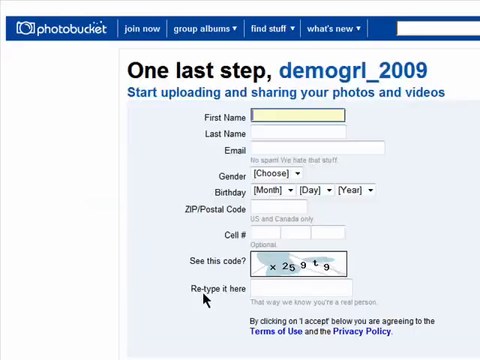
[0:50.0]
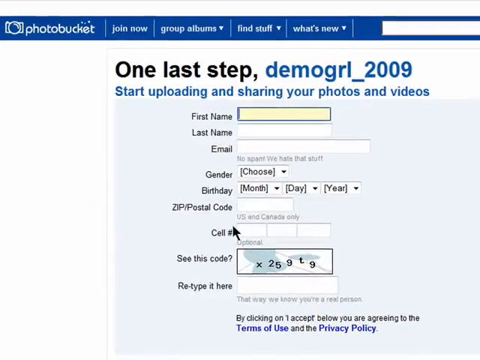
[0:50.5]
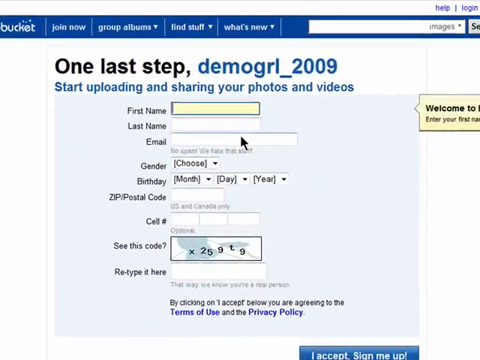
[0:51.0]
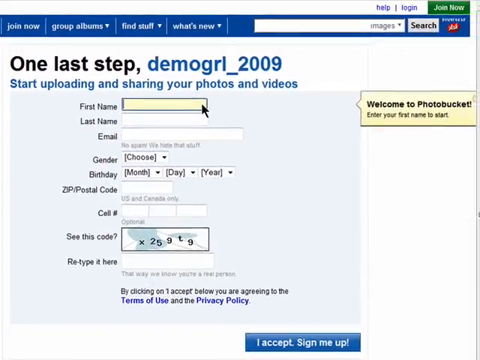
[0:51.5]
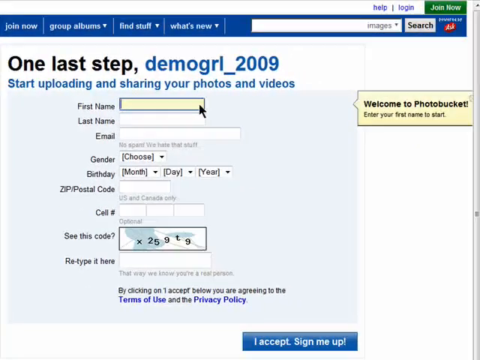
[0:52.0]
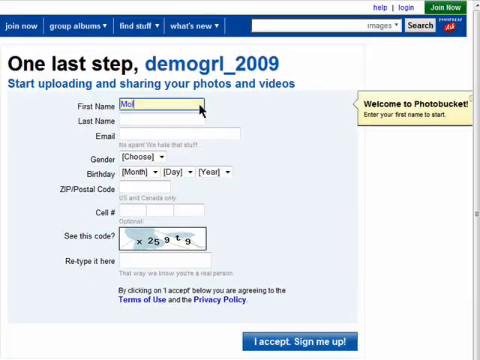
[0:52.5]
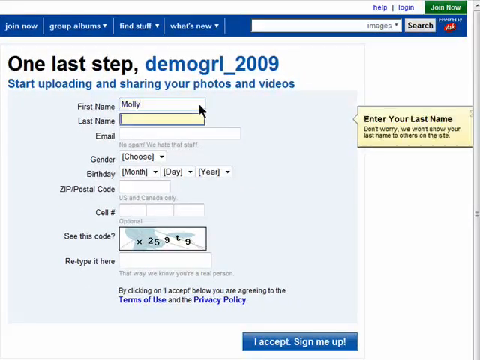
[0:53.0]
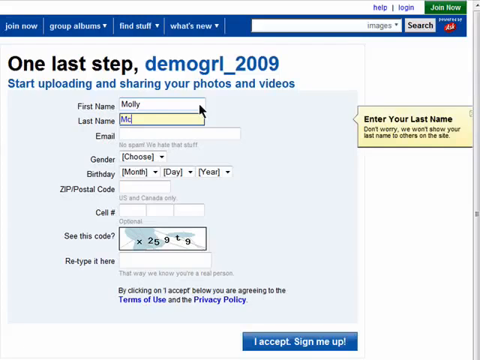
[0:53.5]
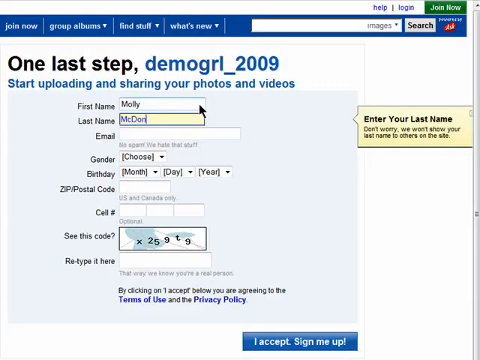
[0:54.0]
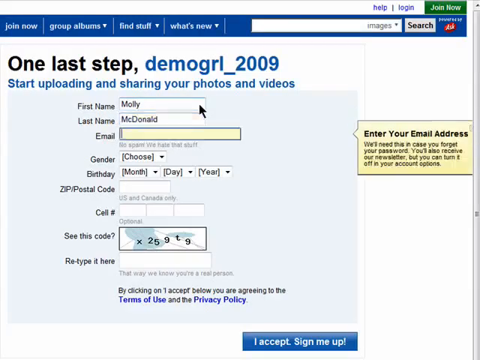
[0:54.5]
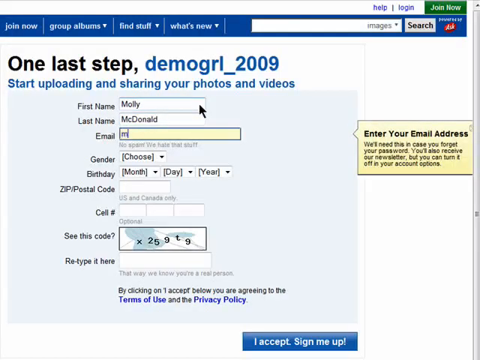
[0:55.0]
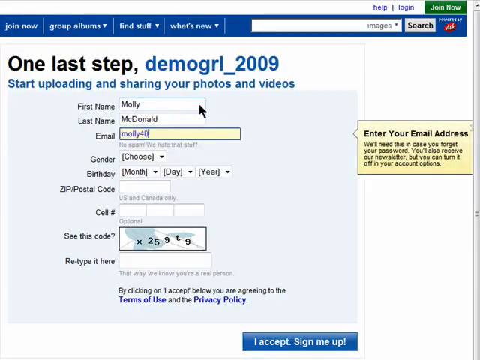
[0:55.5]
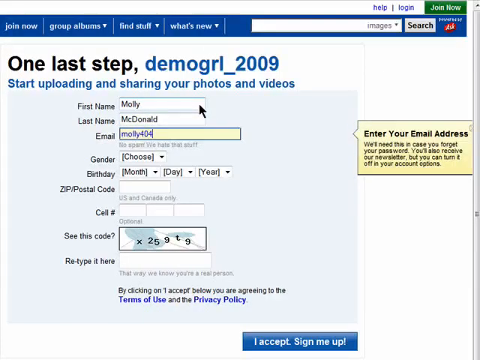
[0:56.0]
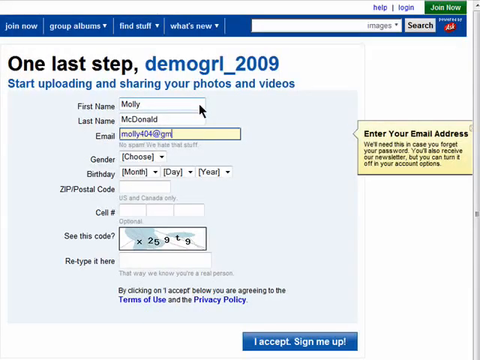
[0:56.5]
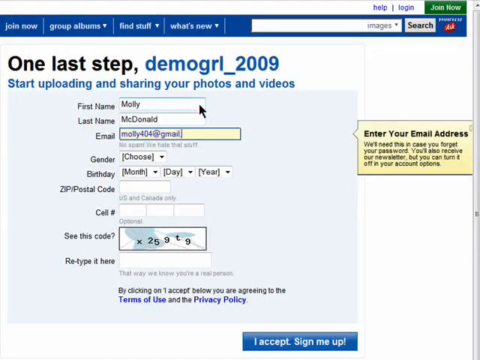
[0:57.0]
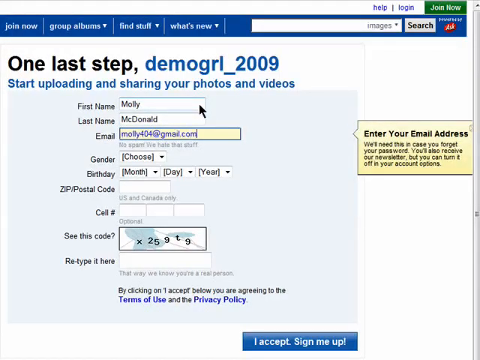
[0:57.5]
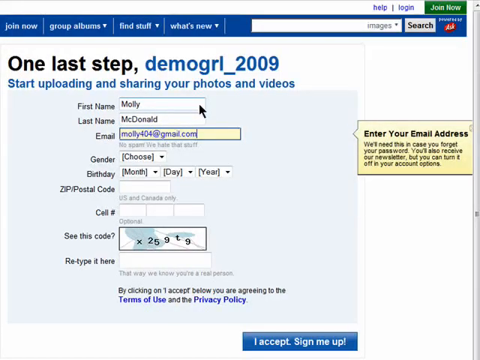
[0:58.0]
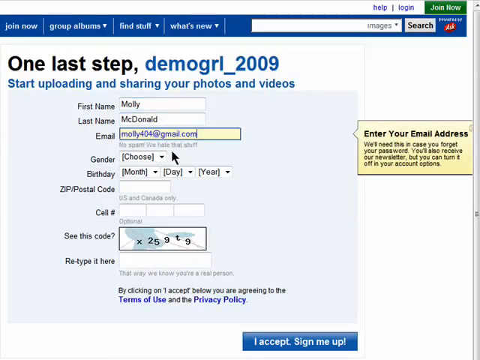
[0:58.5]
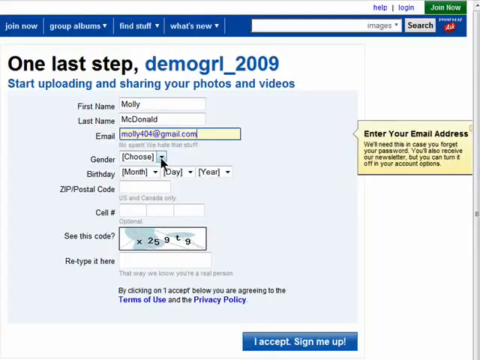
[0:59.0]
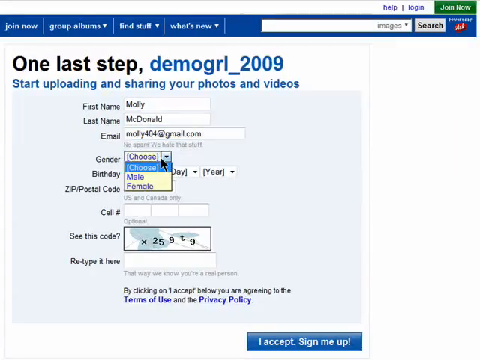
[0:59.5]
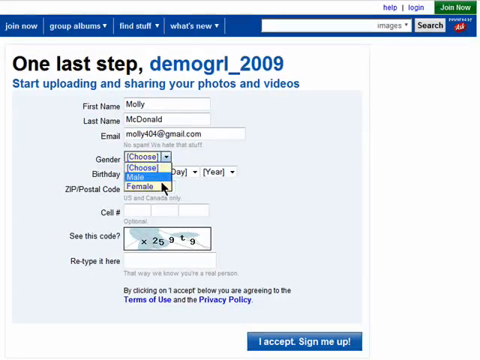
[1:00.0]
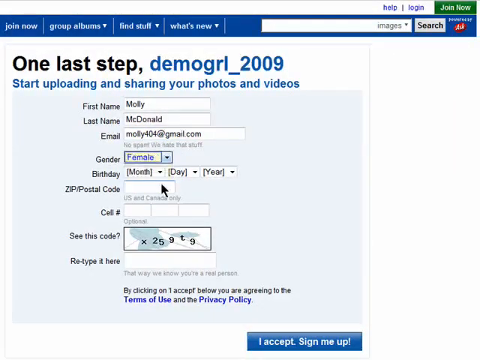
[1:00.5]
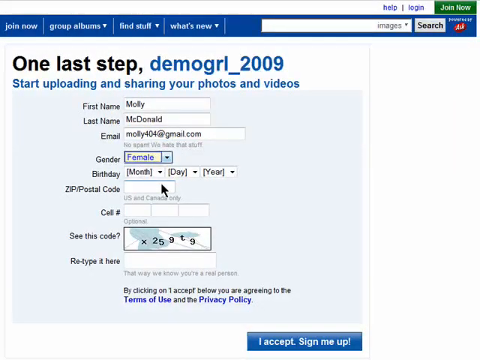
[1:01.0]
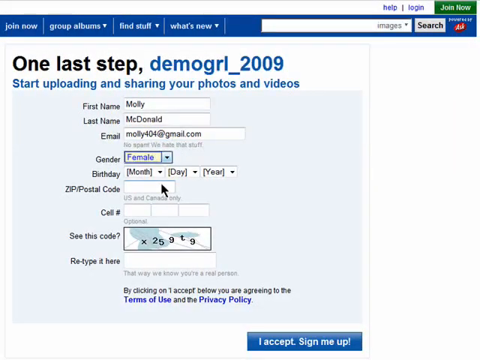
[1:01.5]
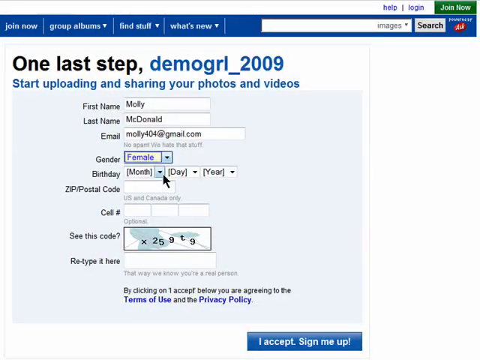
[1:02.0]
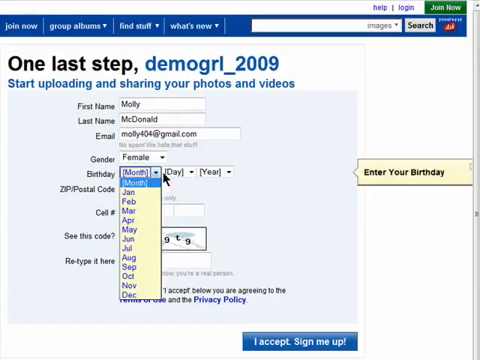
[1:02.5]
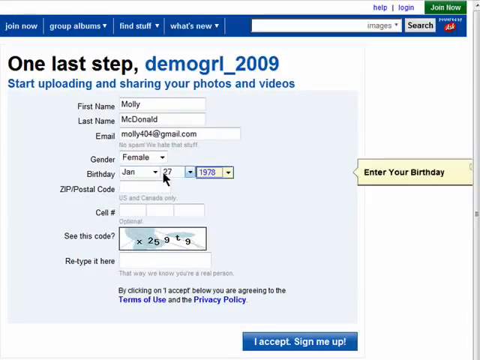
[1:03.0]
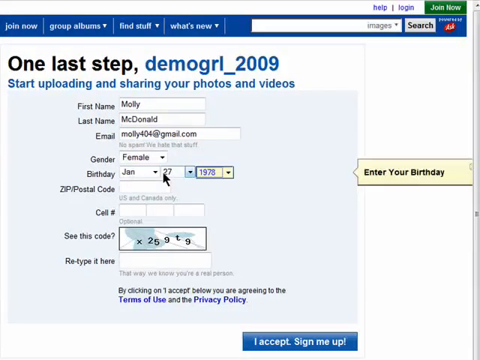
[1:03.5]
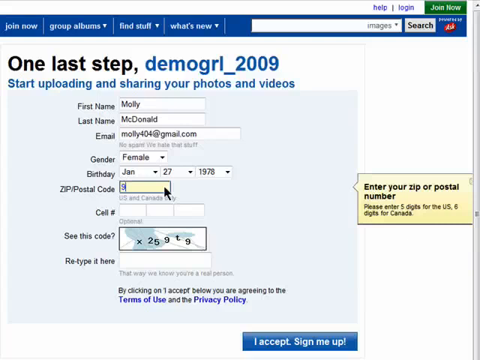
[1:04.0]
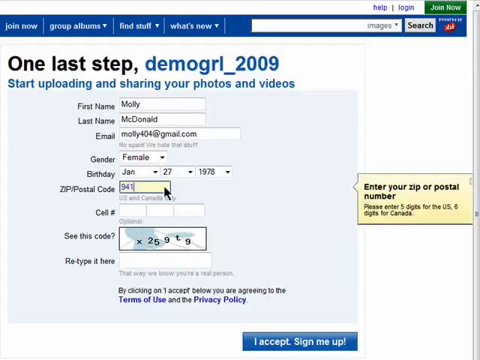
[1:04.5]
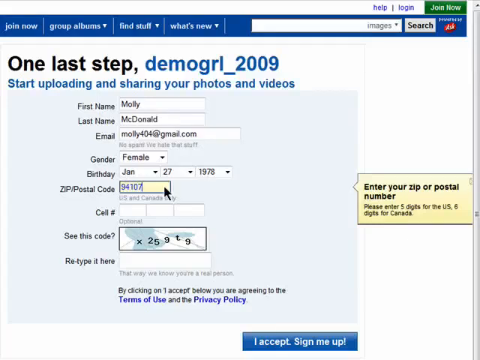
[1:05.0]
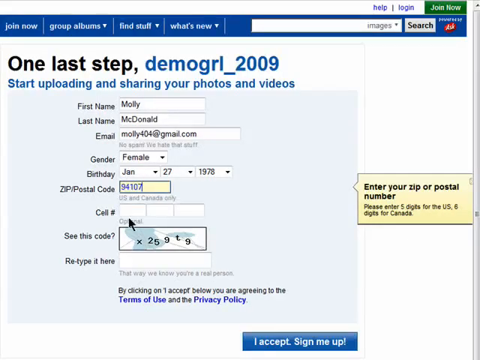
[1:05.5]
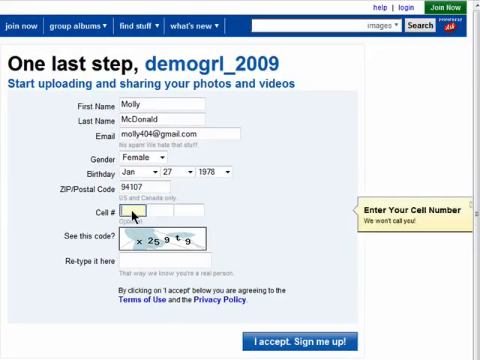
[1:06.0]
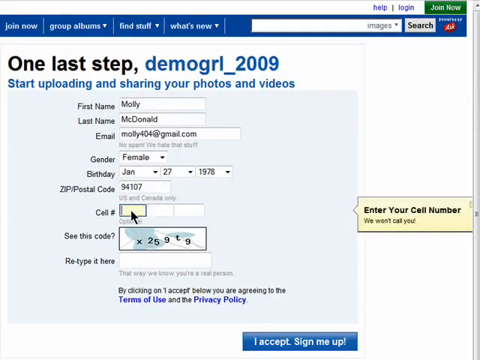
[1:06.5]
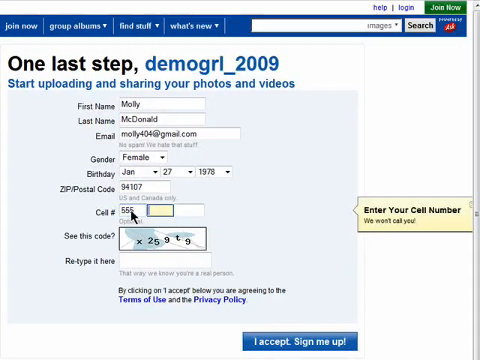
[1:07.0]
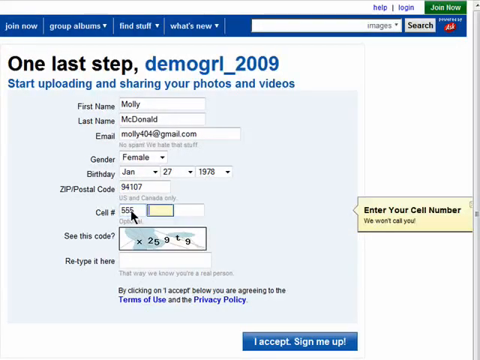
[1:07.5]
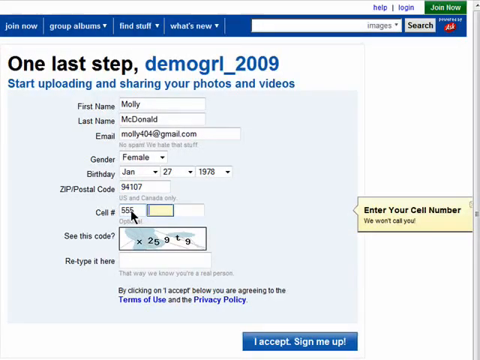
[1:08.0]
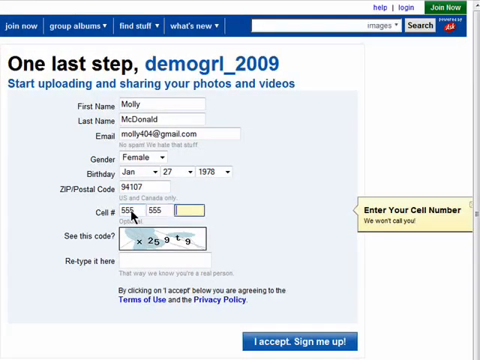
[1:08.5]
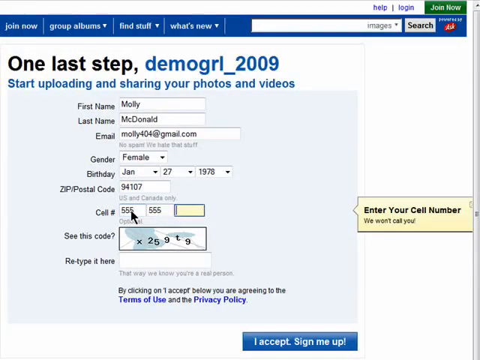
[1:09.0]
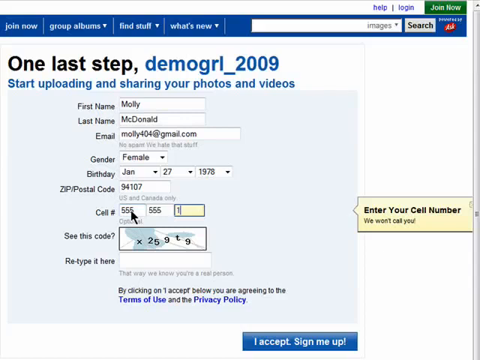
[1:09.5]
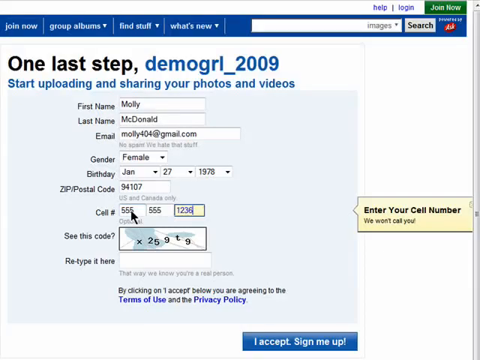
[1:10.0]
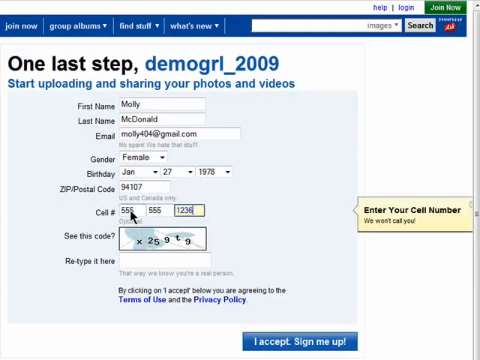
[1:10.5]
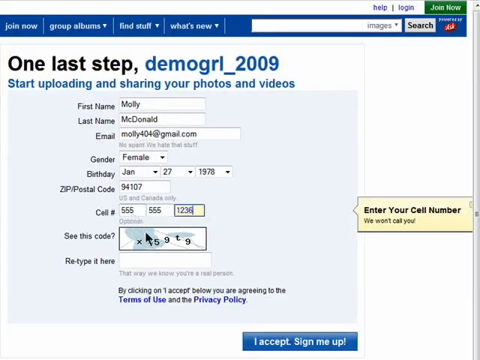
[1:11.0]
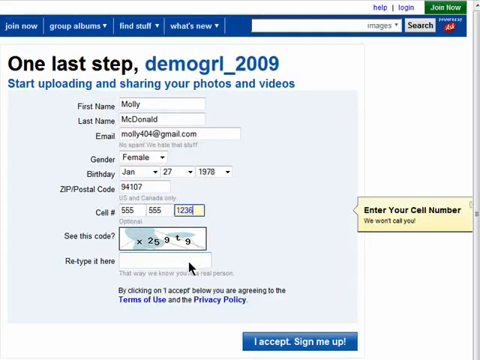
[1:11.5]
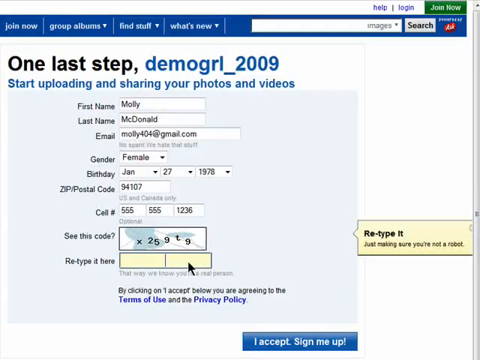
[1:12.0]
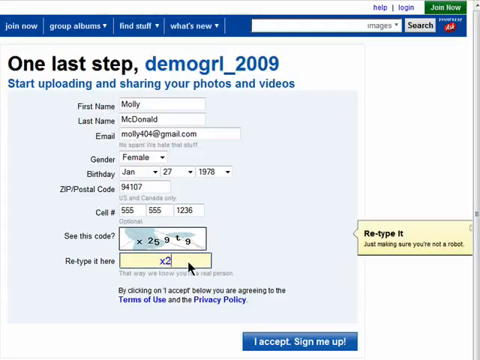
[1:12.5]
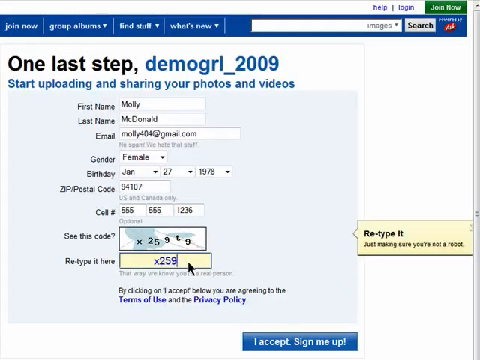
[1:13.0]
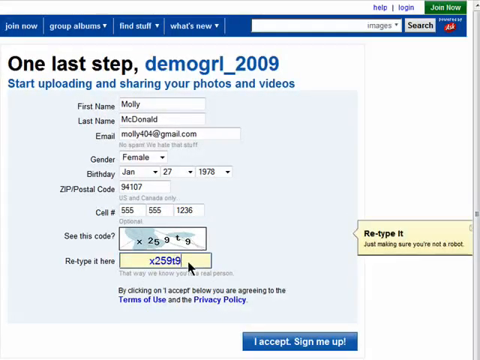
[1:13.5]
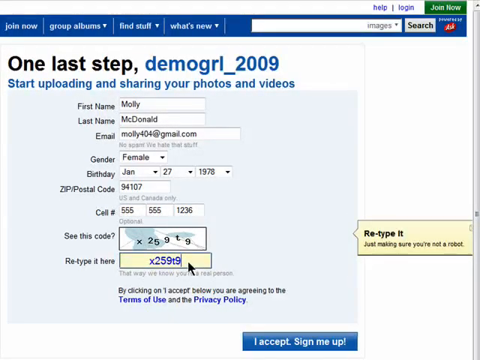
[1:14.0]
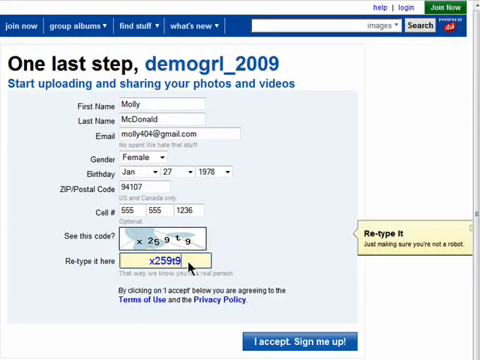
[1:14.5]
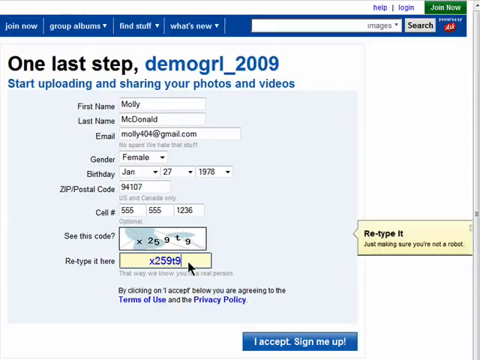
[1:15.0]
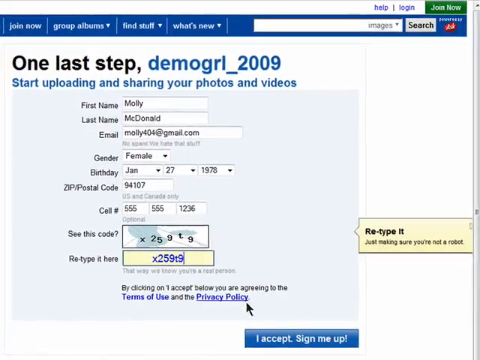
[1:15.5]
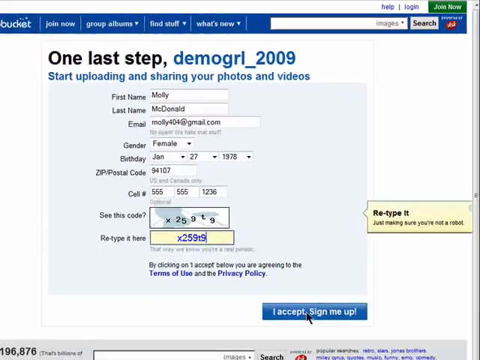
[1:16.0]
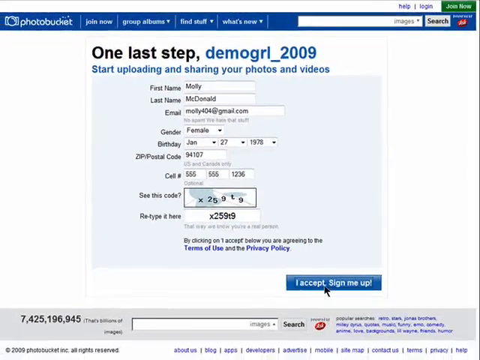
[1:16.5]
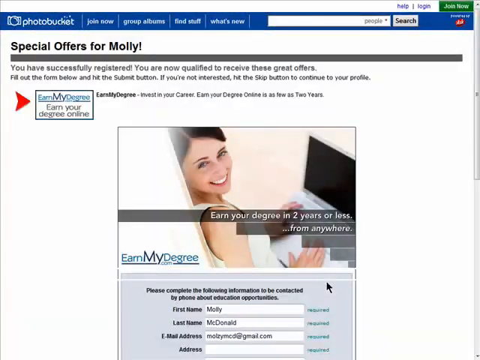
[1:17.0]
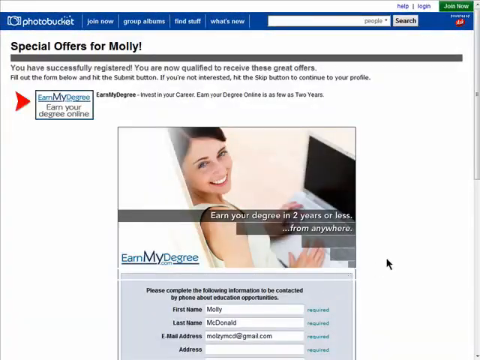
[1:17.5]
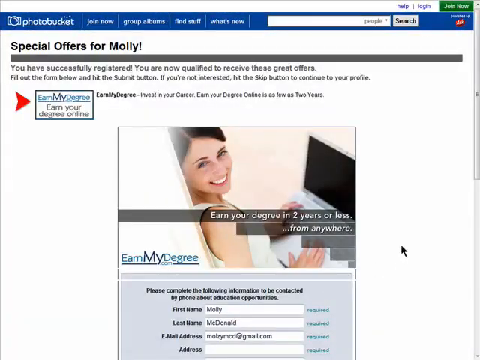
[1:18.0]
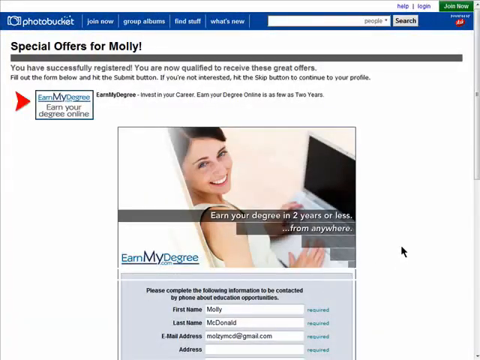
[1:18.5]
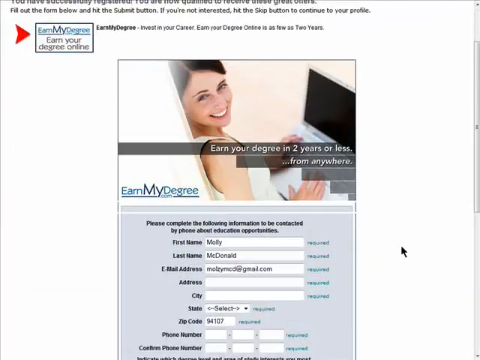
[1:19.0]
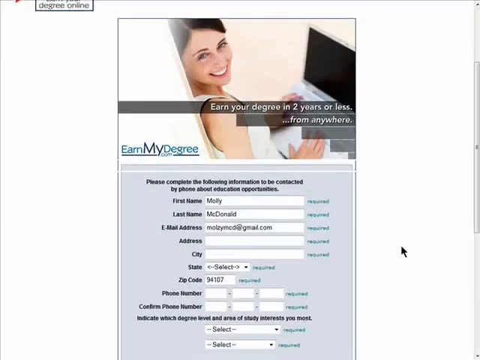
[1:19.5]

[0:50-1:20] A Photobucket screen shows buttons such as join now, group albums, find stuff, and what's new. Blue and black text reads "one last step demo girl_2009 start uploading and sharing your photos and videos." A section has fields for first name, last name, email, gender, birthday, zip, postal code, and cell number. A CAPTCHA box says "see this code" and "retype it here, that way we know you're a real person," and terms of use and privacy policy text reads "by clicking on I accept below you're agreeing to the terms of use and the privacy policy." The user clicks into the first name field and types Molly, then last name McDonald, email molly404@gmail.com, gender female, birthday January 27, 1979, zip code 94107, and cell number 555-555-1236, then types the code x2599 and clicks "I accept, sign me up." A page then appears reading "special offers for Molly, you have successfully registered, you're now qualified to receive these great offers. Fill out the form below and hit the submit button if you're not interested, hit the skip button to continue to your profile." An earnmydegree.com offer says "earn your degree in two years or less from anywhere." The user scrolls down.